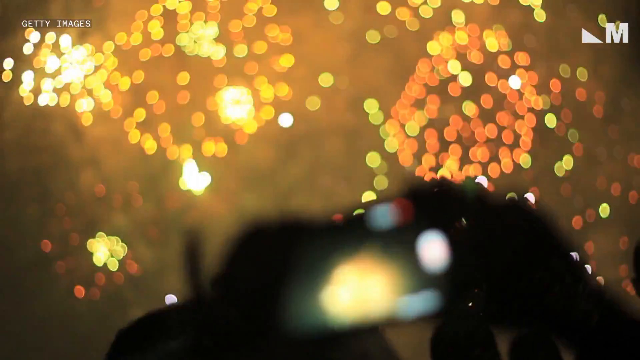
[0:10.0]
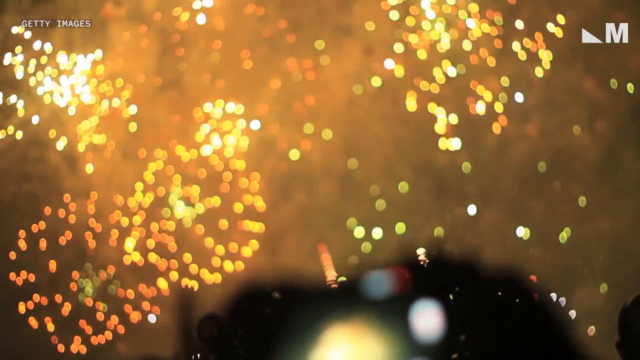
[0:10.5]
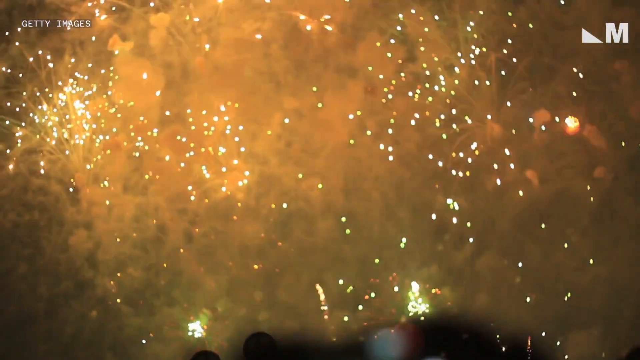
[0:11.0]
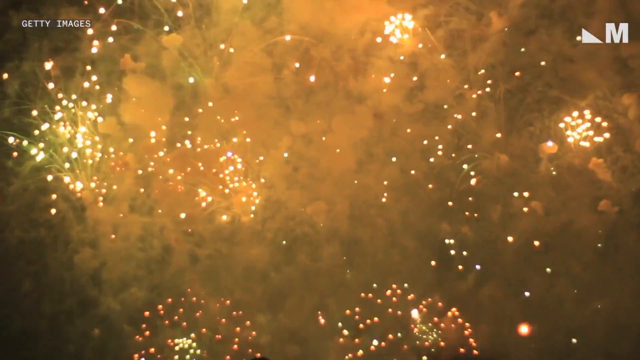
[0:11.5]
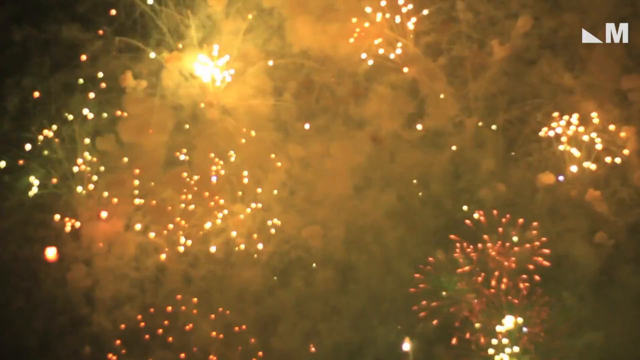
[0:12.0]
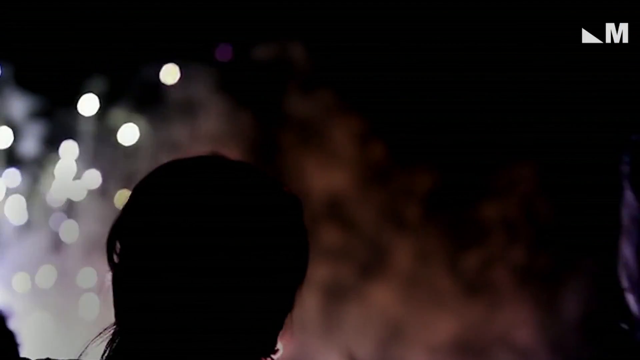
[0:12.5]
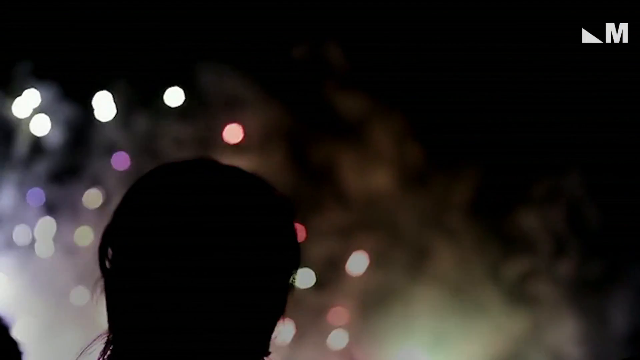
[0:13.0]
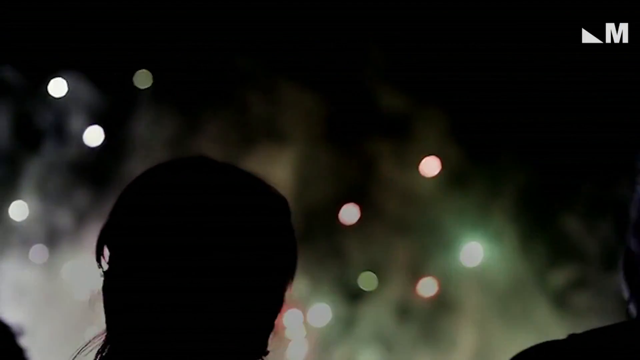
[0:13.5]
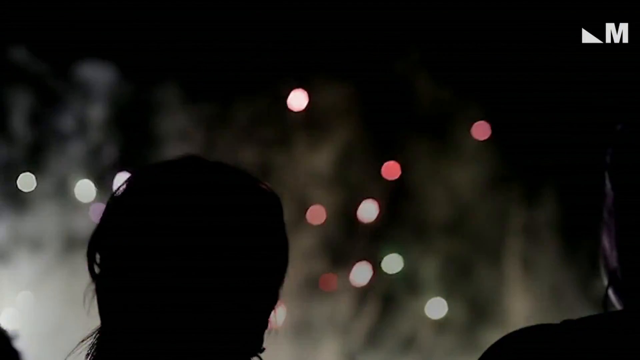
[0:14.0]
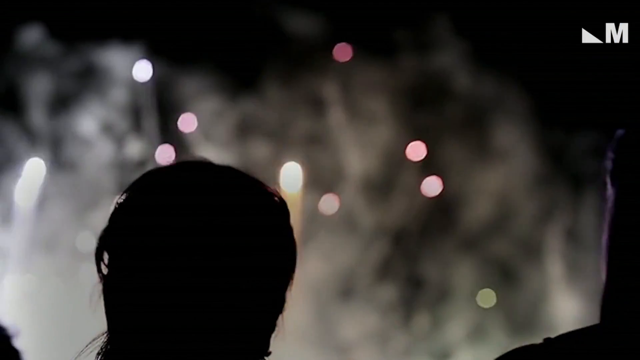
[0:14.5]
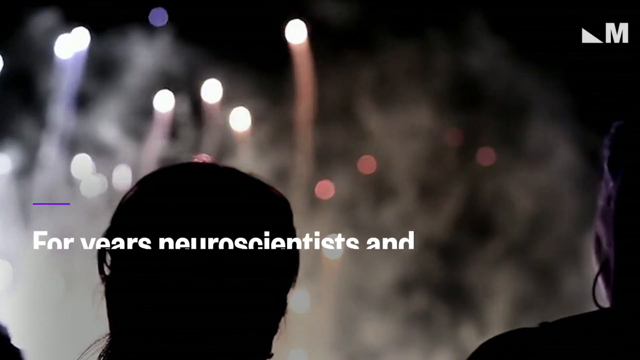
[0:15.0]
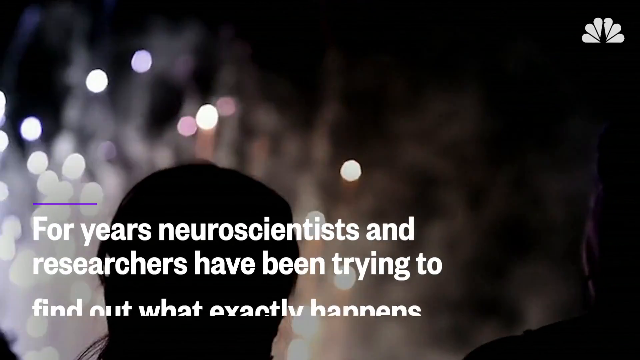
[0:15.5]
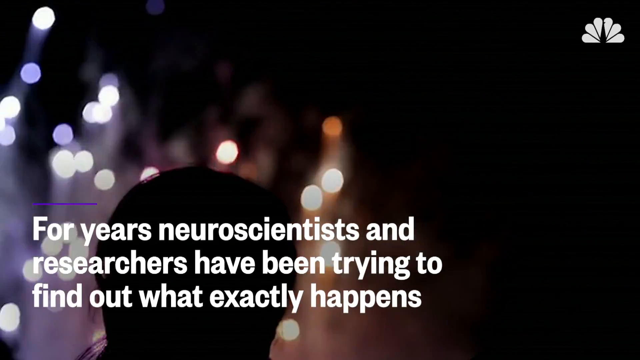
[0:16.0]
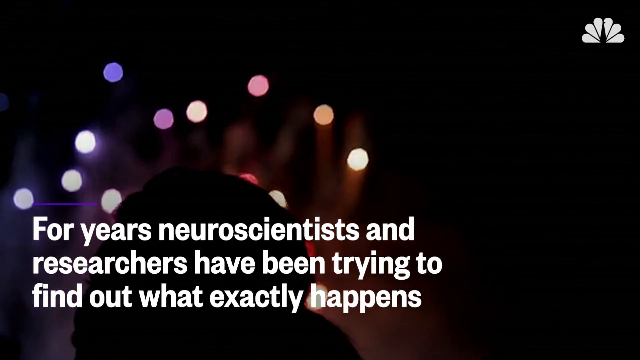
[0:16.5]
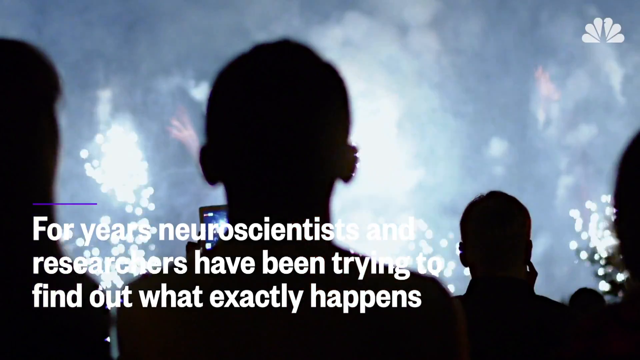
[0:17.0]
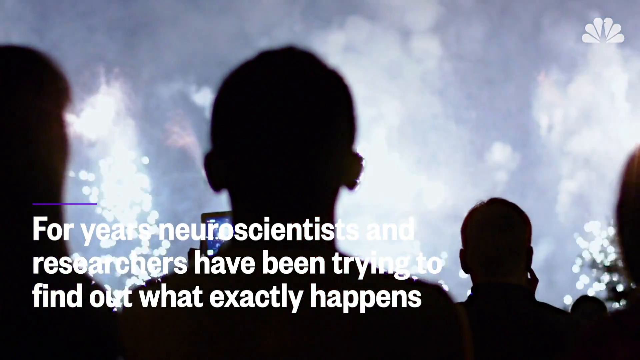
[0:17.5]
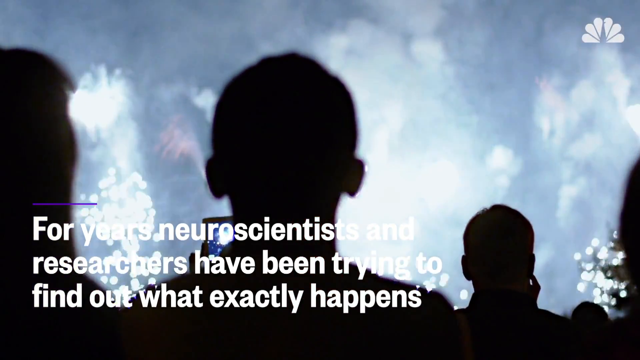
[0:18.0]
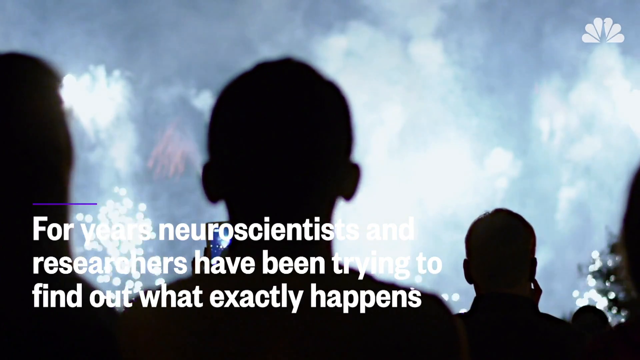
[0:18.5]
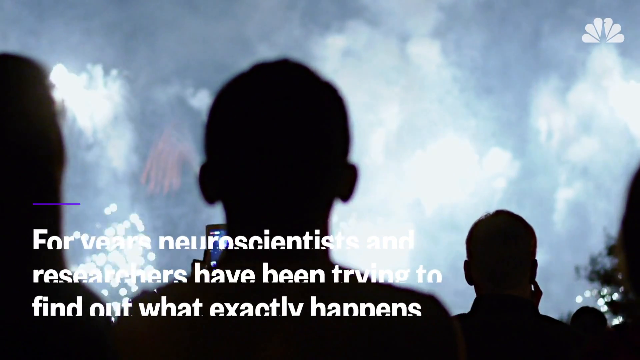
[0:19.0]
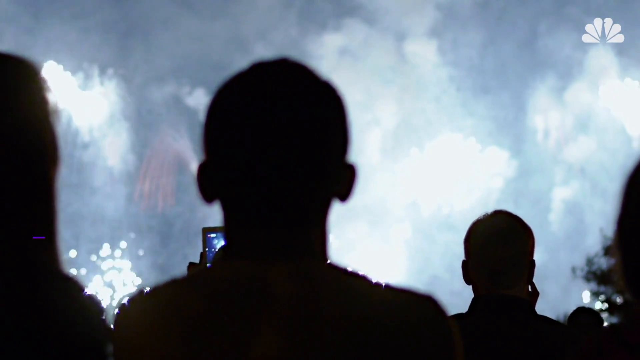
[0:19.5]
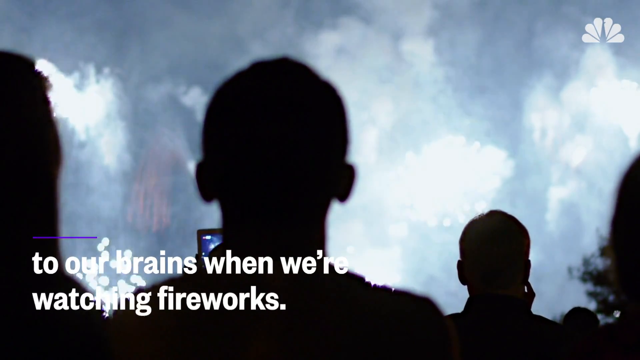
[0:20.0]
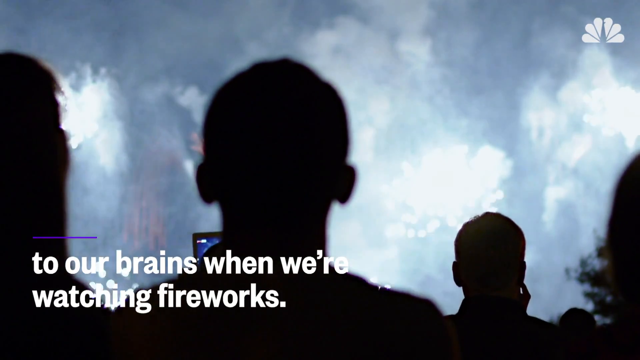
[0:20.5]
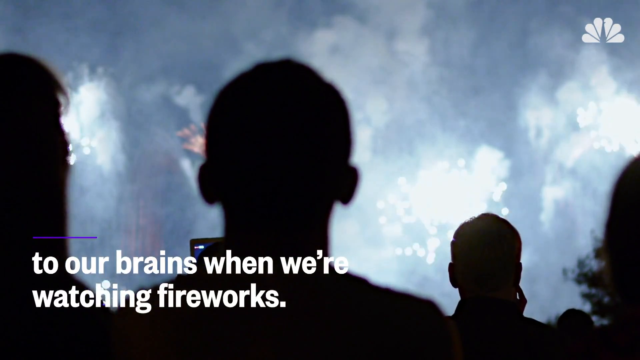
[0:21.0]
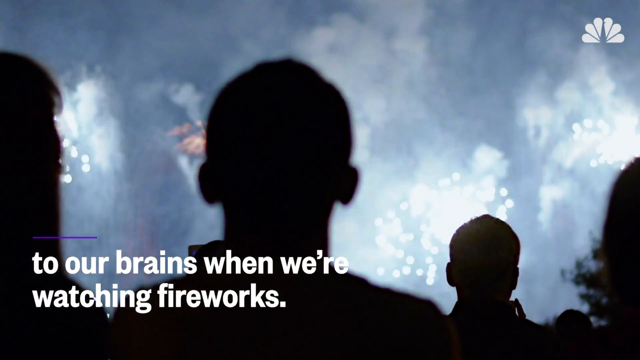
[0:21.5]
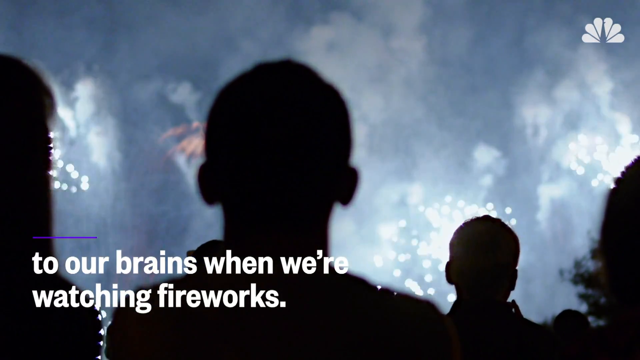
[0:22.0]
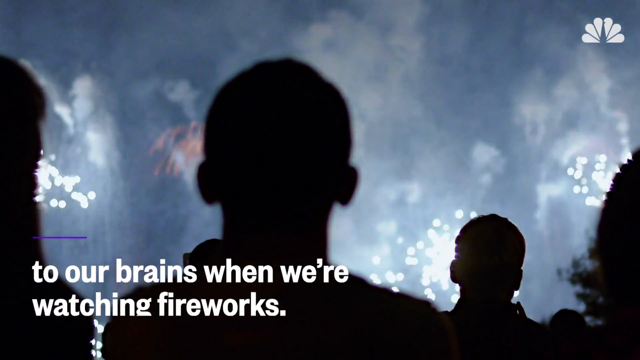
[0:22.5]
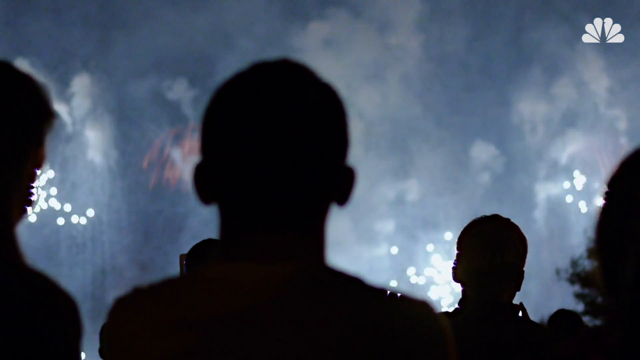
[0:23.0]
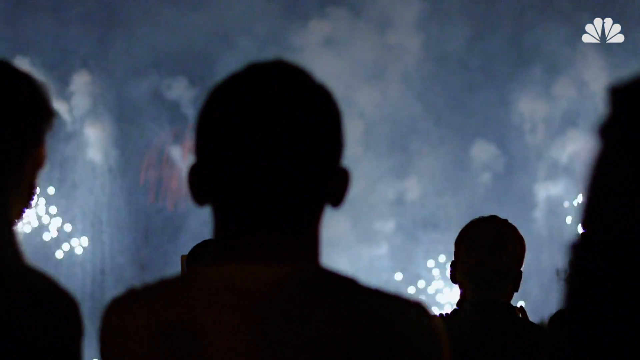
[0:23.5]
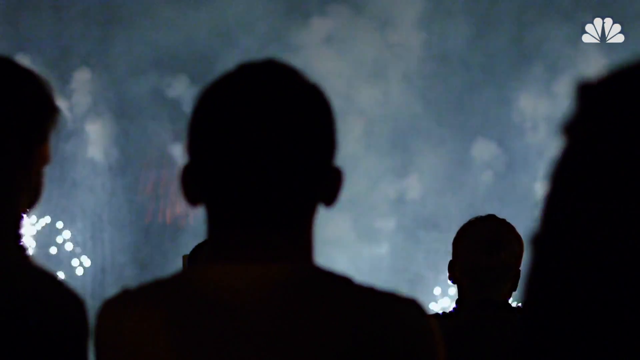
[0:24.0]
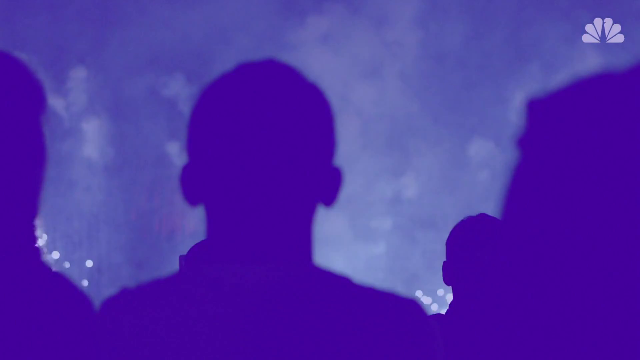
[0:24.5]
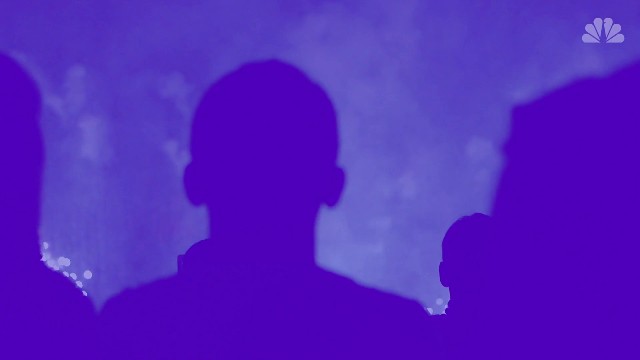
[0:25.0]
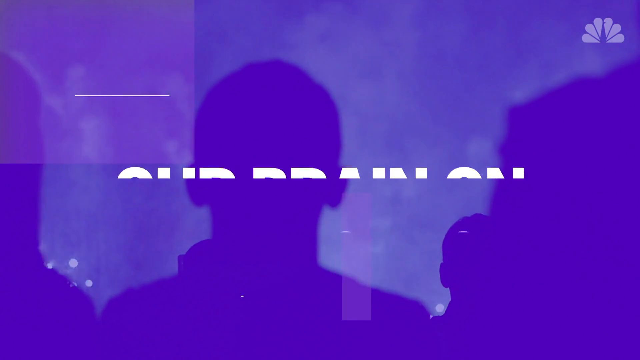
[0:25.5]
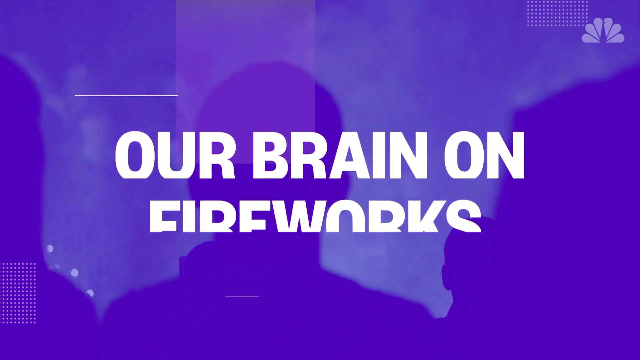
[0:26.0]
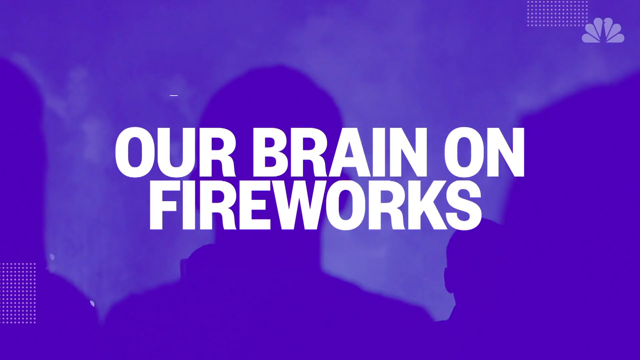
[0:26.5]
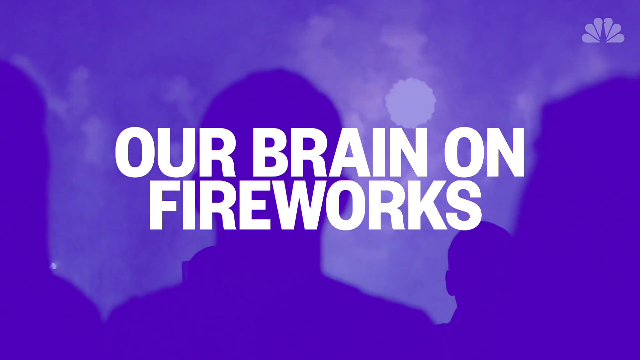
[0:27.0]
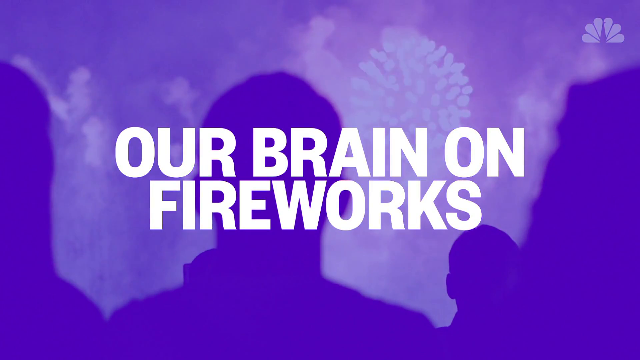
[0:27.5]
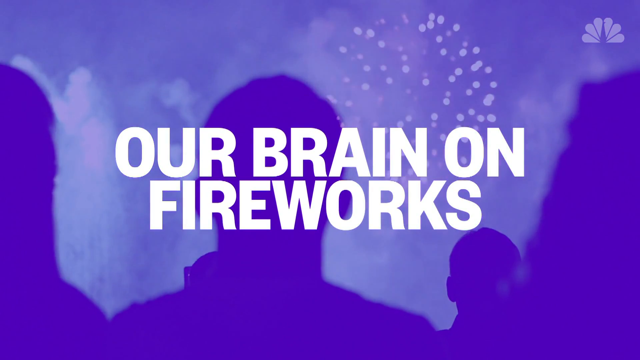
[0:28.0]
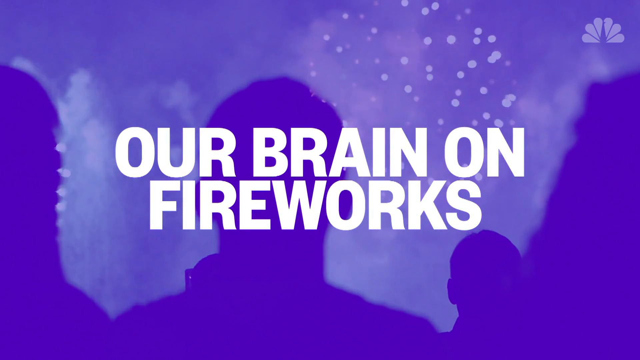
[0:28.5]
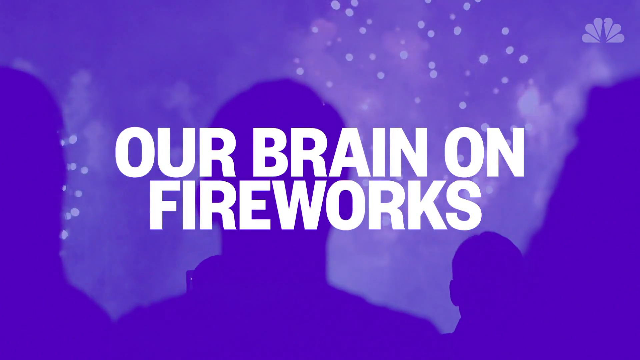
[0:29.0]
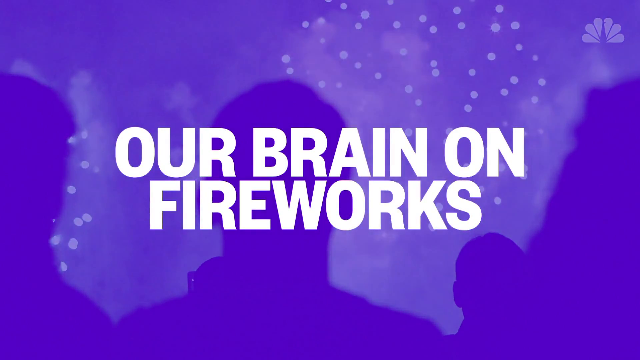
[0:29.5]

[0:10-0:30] Someone records the fireworks with their phone's camera. At first the fireworks are yellow and orange, and they detonate into smaller explosions in the sky. Then someone's head appears; this person is watching the fireworks, and behind them fireworks are released and detonate. Text on the screen says "for years neuroscientists have been trying to find out what exactly happened to our brains when we're watching the fireworks". Many different fireworks are set off in the sky, and different people watch and record them, using their hands to hold their phones. The background containing the fireworks is slightly blurred.